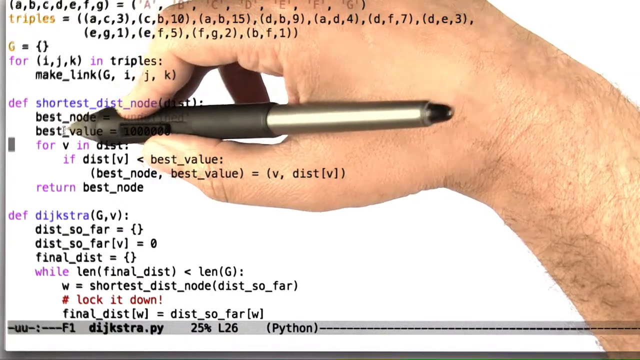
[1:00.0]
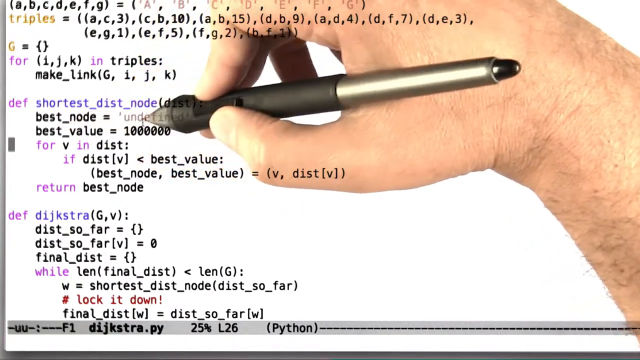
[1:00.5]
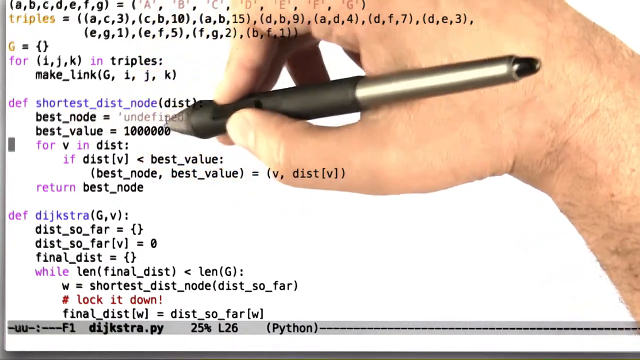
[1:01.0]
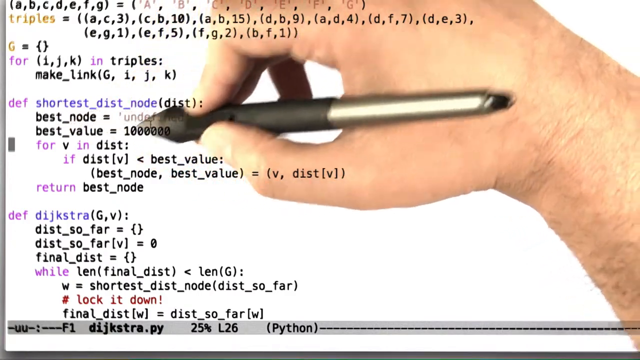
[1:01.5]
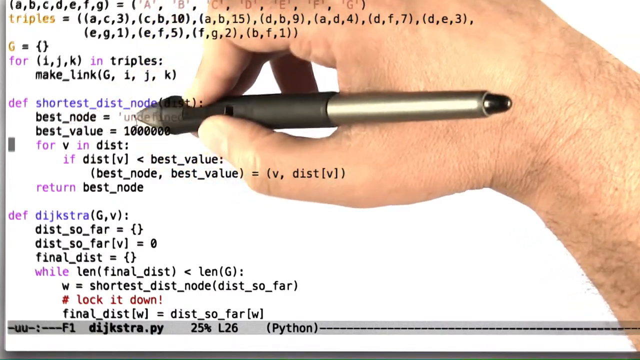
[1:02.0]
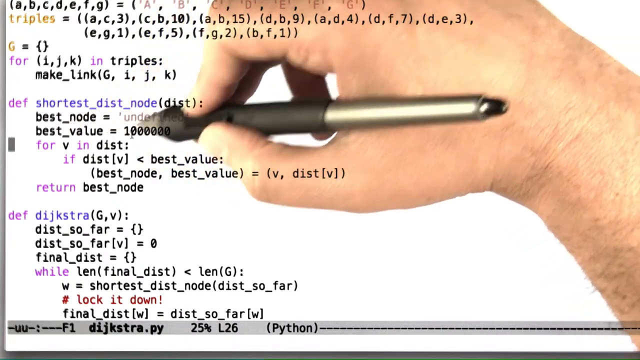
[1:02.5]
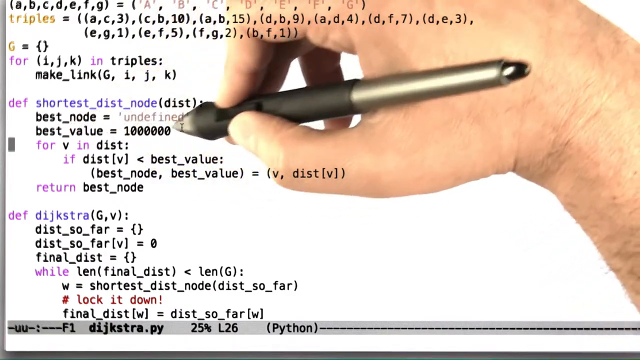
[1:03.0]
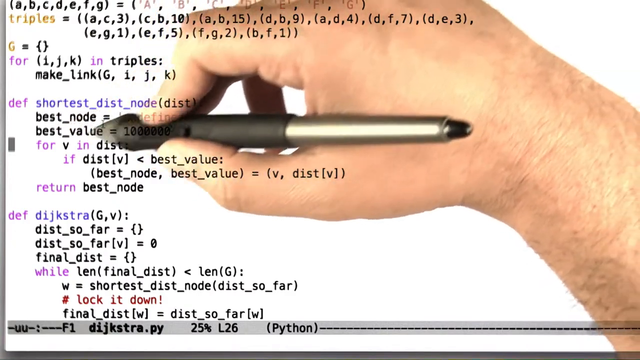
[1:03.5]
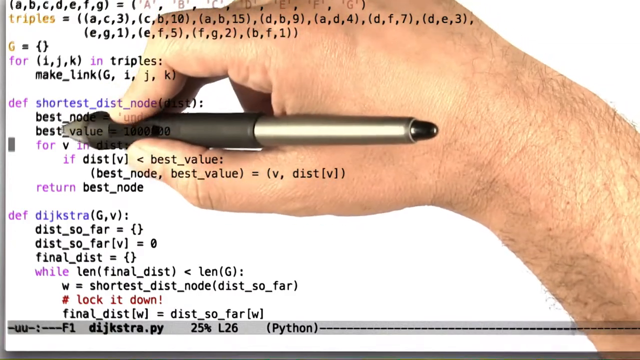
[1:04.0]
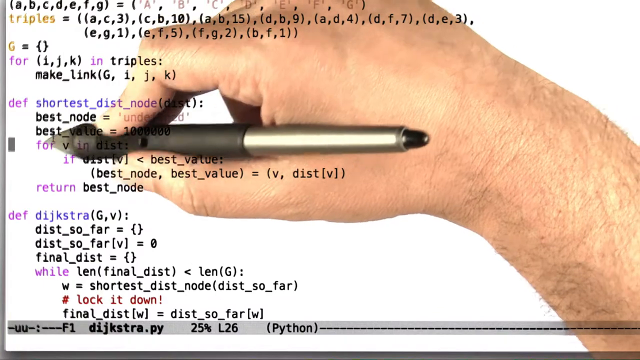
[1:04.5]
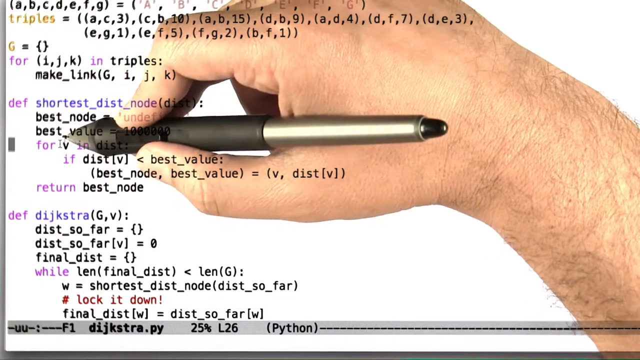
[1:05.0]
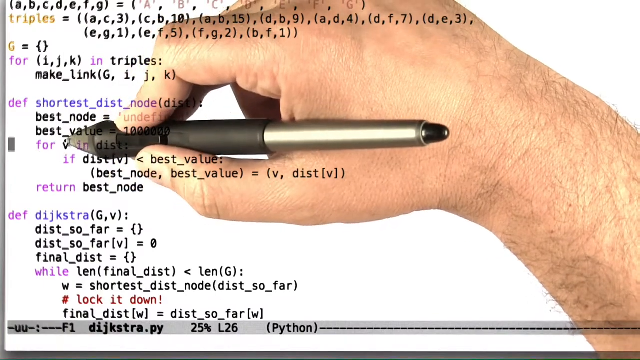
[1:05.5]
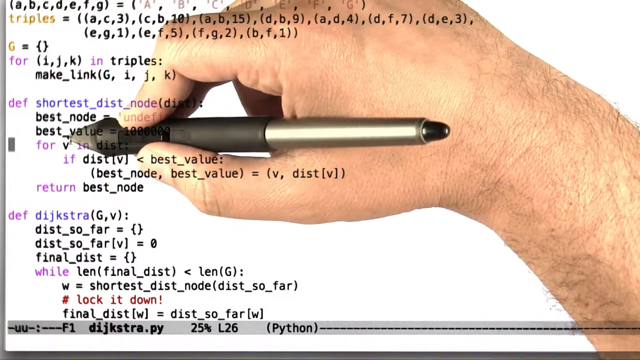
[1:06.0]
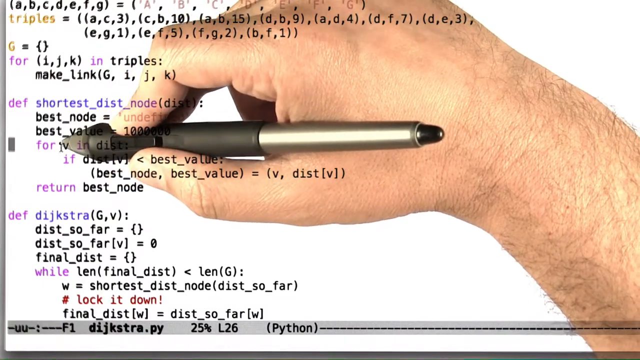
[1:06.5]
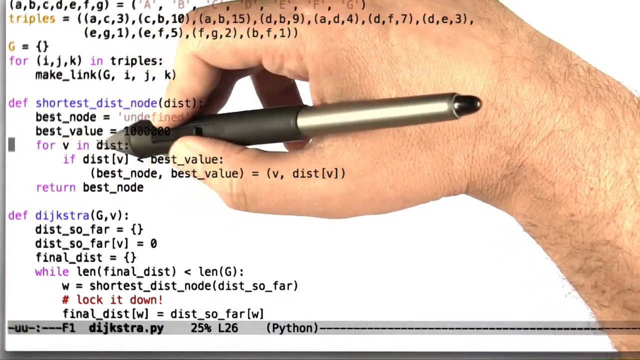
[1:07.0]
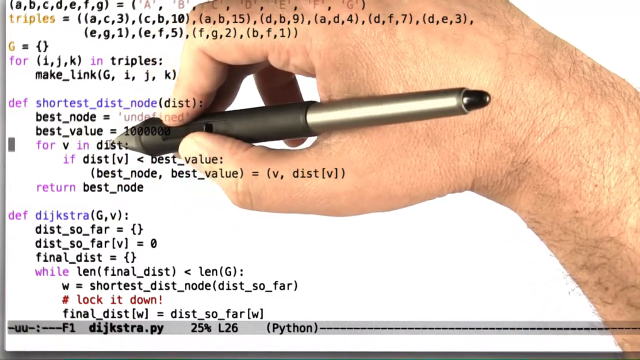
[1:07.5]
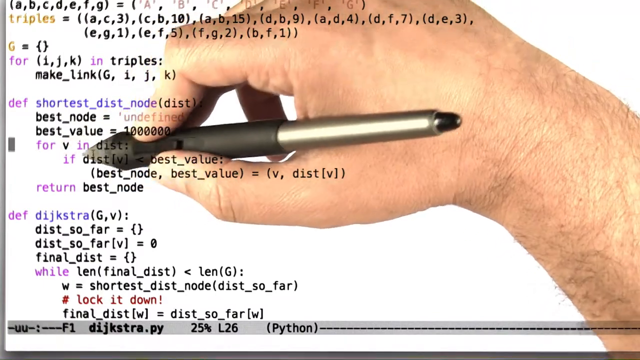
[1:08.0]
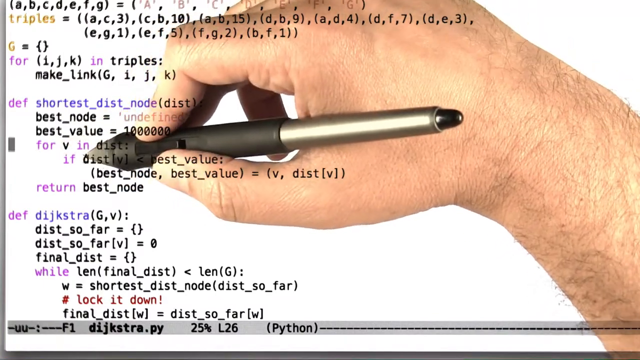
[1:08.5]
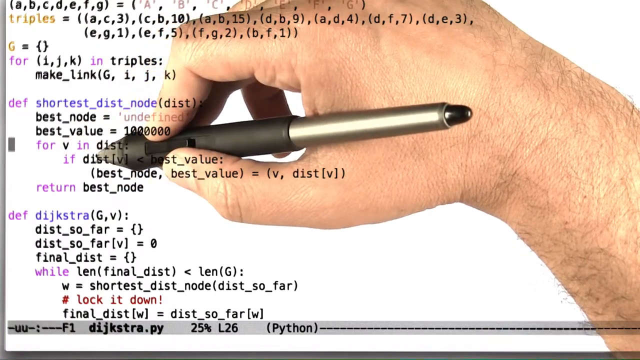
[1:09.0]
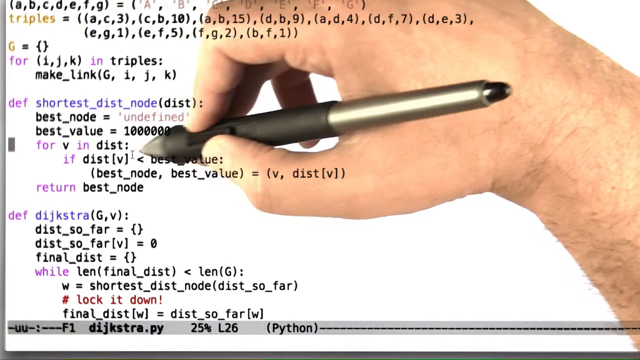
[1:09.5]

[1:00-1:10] The person's hand holds the pen, writing on the whiteboard behind the lines of code that are in front. The pen works as both a mouse and a pen: the pen part writes words onto the whiteboard, and now a mouse cursor is dragged around in a certain area, moving along the lines of code as if reading them.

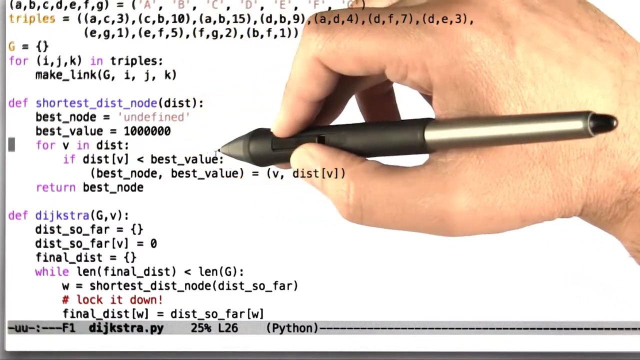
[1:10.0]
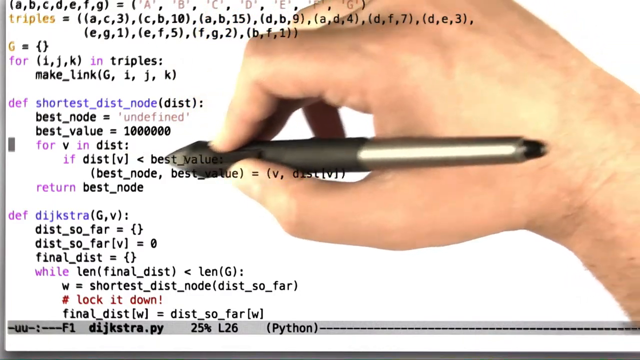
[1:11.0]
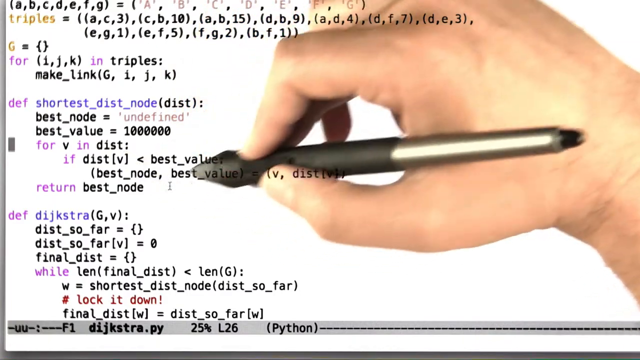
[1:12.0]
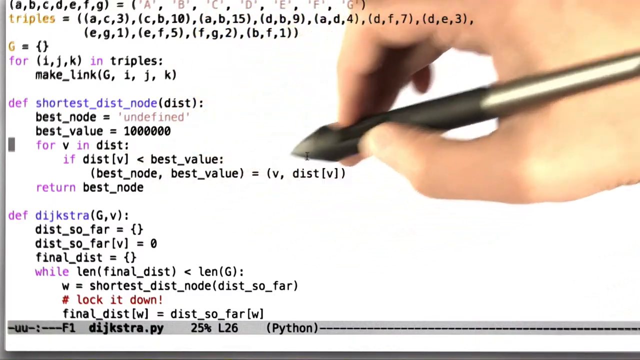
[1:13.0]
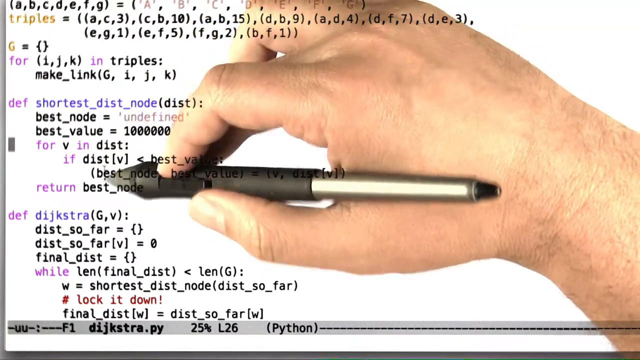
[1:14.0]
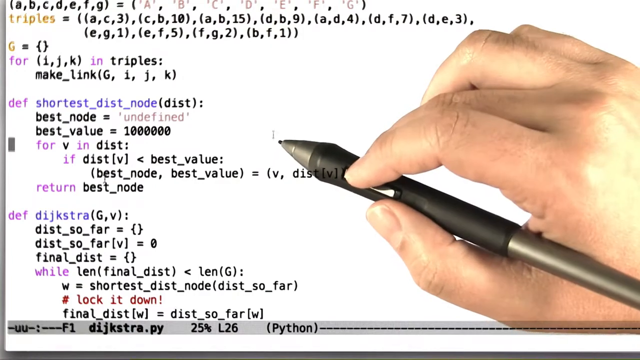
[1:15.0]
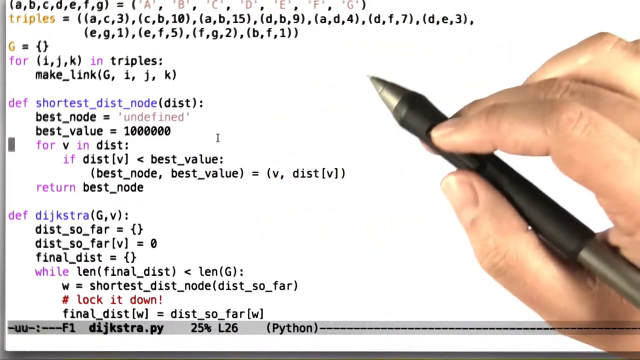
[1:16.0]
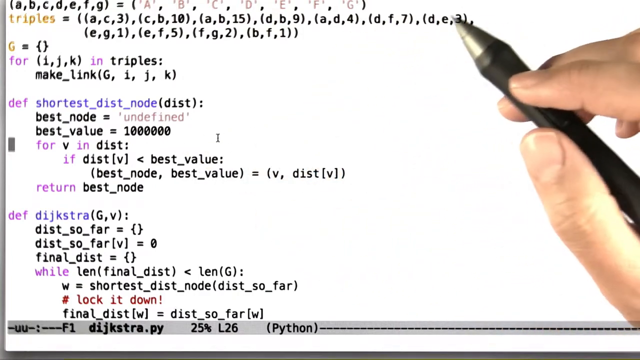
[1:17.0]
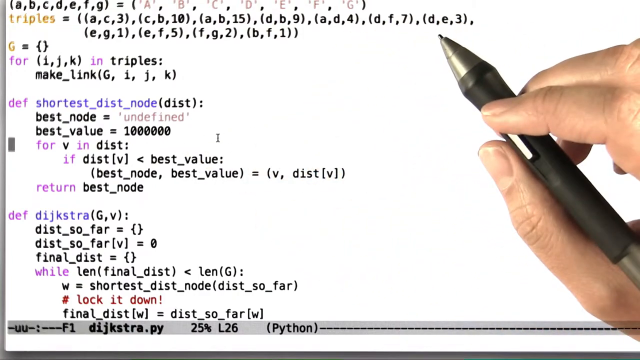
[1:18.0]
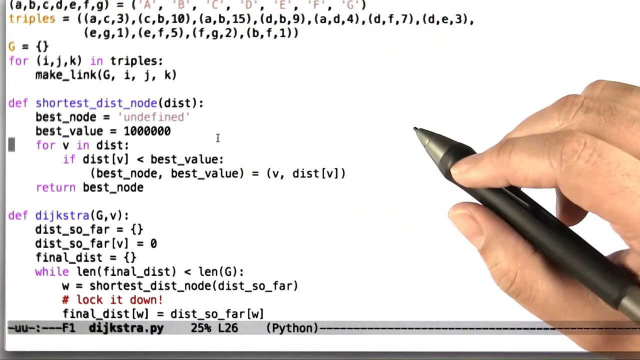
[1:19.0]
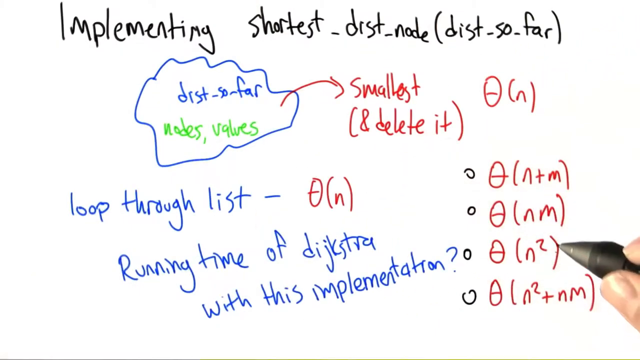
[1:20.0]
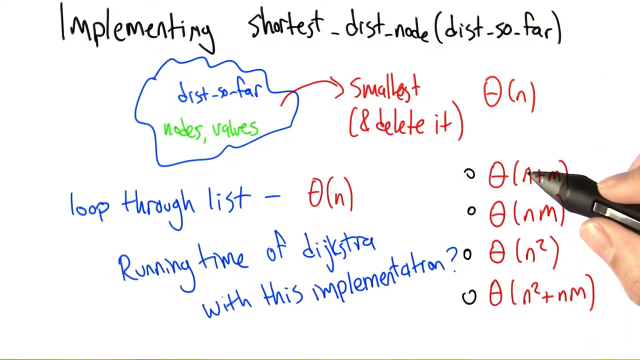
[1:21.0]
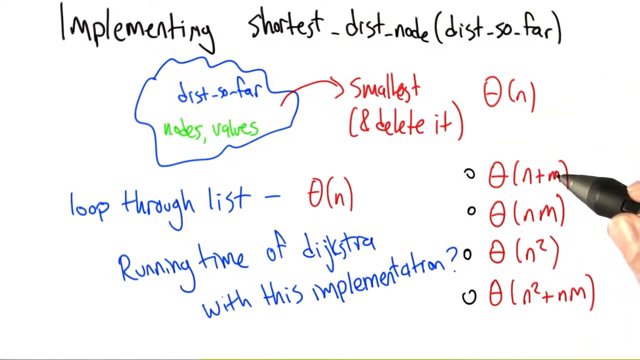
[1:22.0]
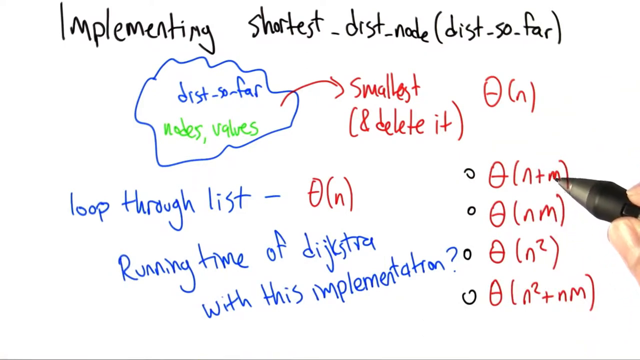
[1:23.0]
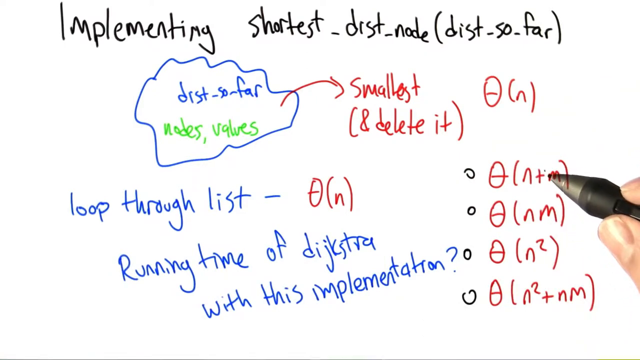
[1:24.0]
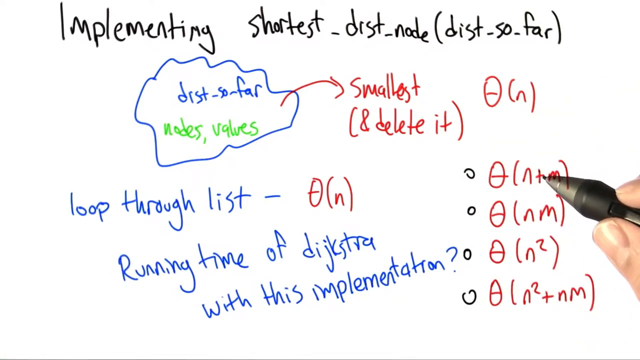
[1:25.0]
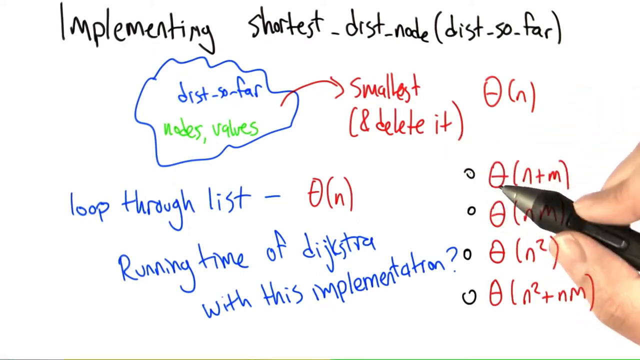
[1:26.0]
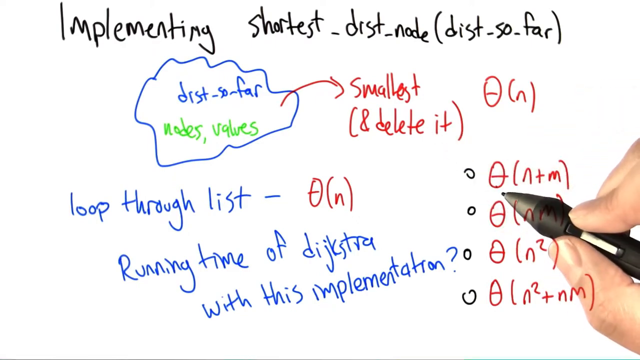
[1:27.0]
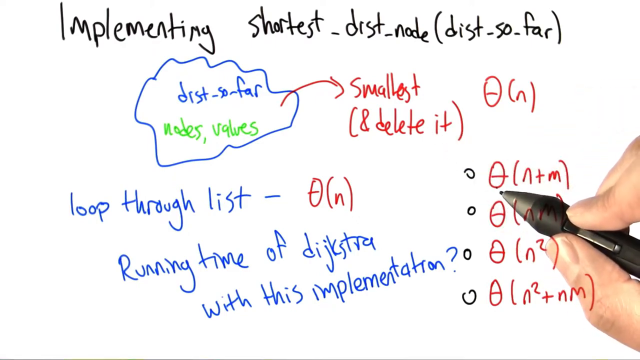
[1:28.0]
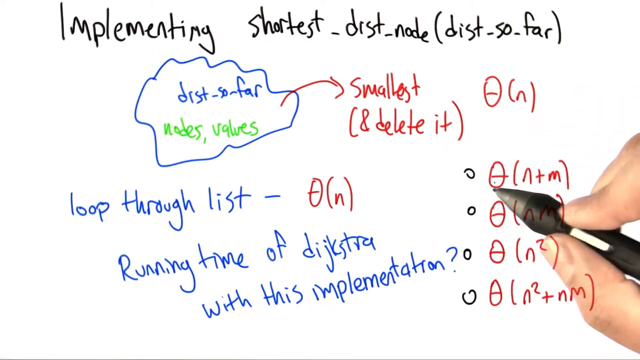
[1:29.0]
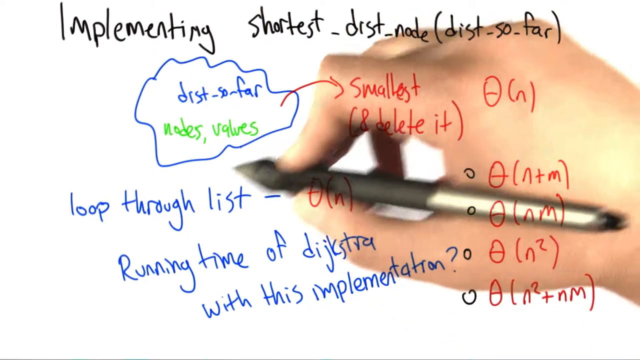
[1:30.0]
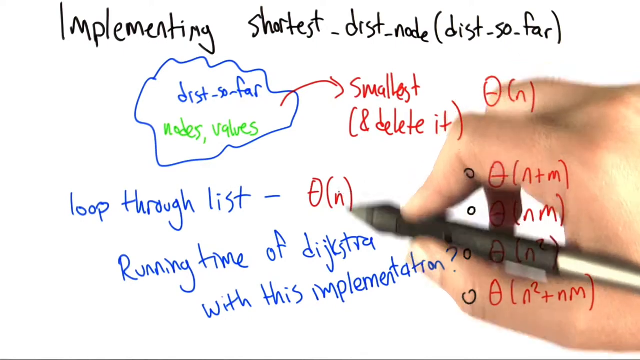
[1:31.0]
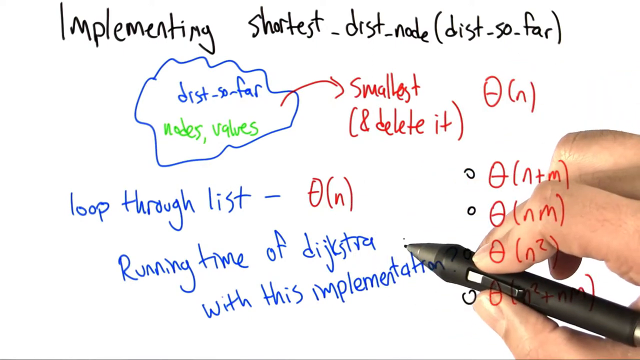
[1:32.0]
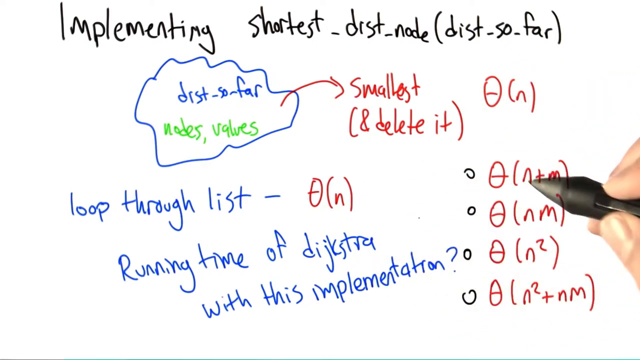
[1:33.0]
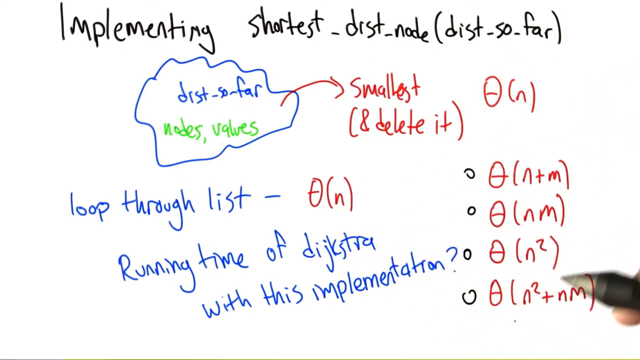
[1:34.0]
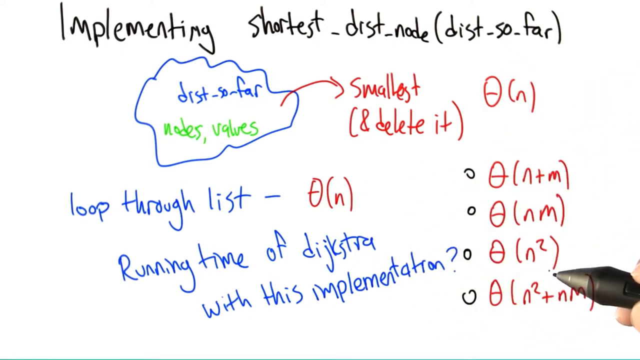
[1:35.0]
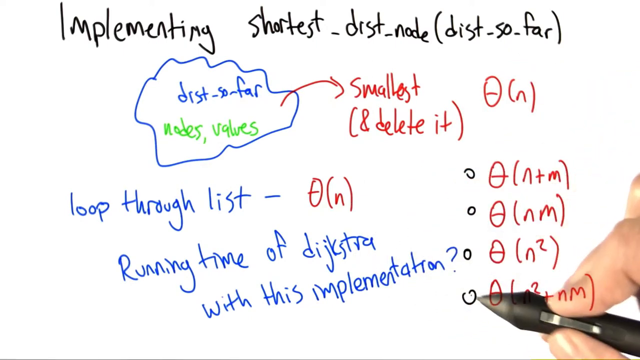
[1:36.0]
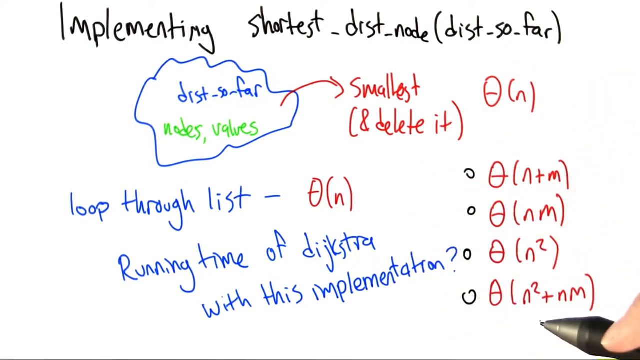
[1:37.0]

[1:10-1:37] The person uses the pen to point out different areas of the code, mainly in the very center of the screen, circling around those areas. The pen puts a cursor onto the screen, so it works as a mouse as well. The screen then returns to the first screen with the title "implementing shortest DRST node" and "DIST-so-far". The squiggly circle in the middle of the page has blue and green text in it. To the right of the page, the person has written a lot of red text, and on the bottom left they have written a bunch of blue text in lines, apparently explaining how they are coming up with the code seen earlier. They use the pen to point out different areas of the page and read the lines of text written there, seemingly explaining how they are making their code and what the code will be for.